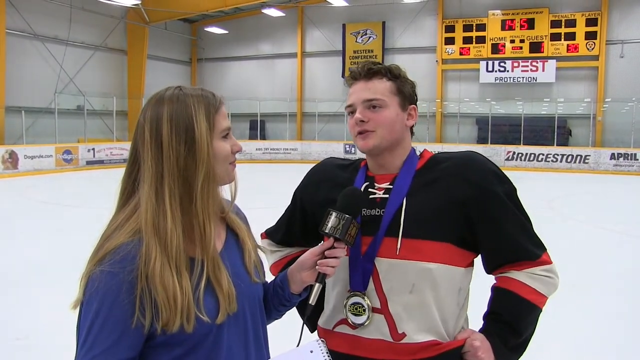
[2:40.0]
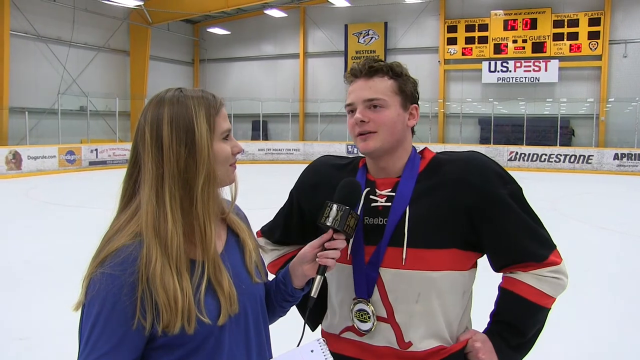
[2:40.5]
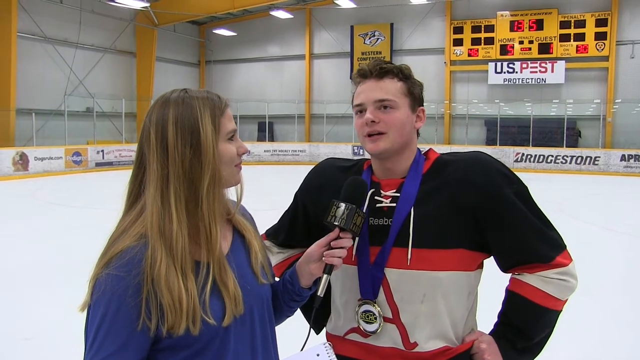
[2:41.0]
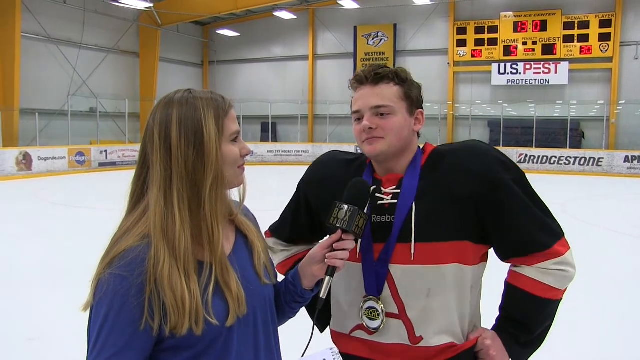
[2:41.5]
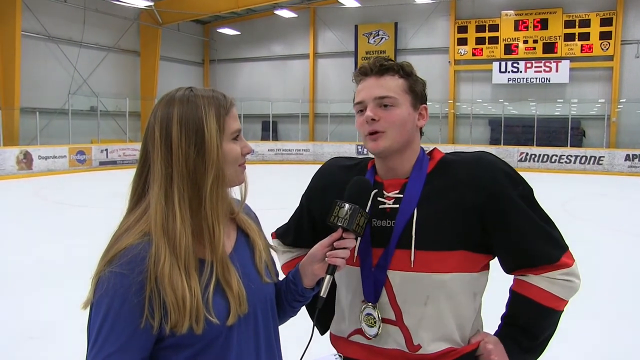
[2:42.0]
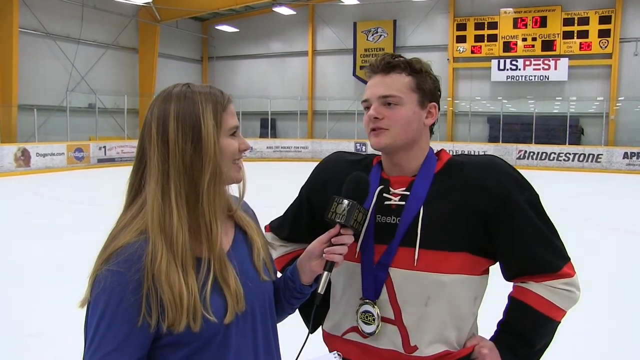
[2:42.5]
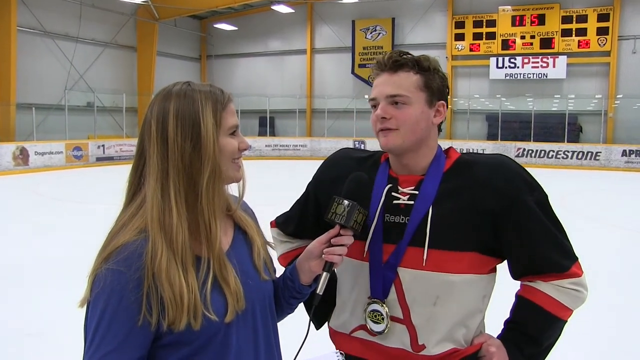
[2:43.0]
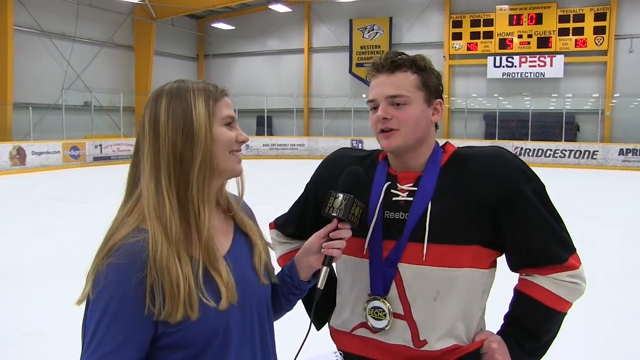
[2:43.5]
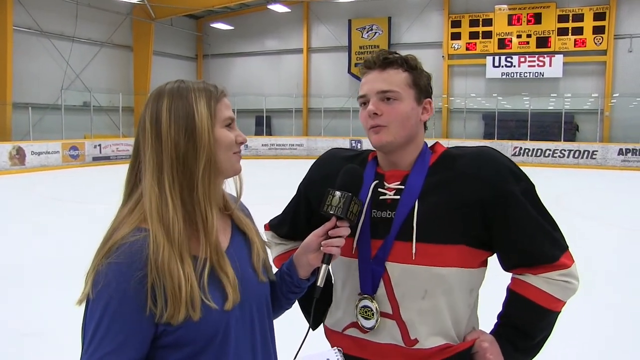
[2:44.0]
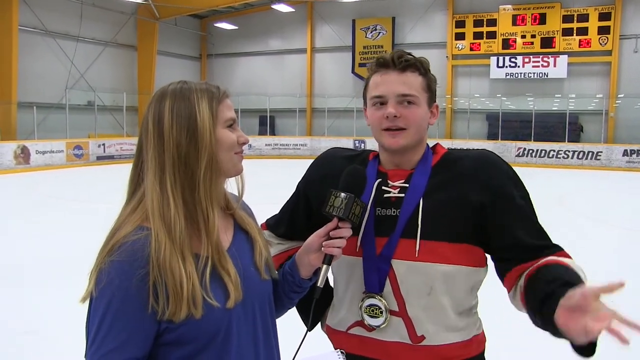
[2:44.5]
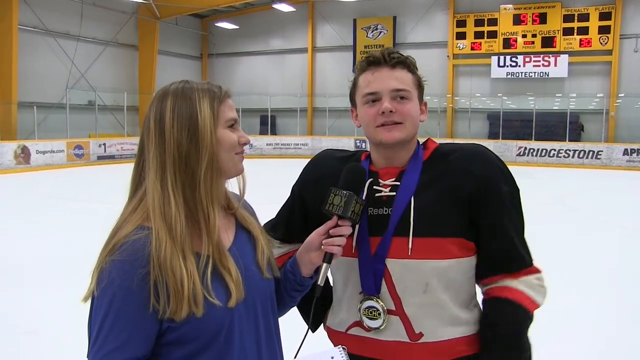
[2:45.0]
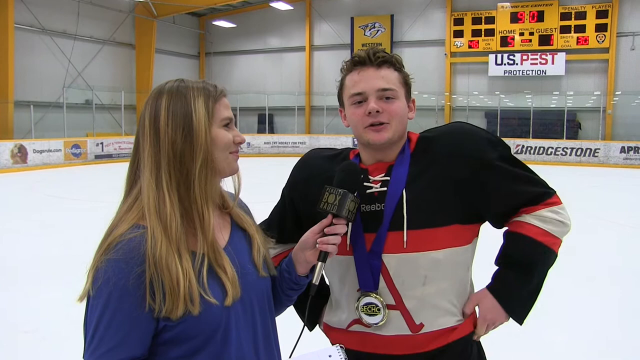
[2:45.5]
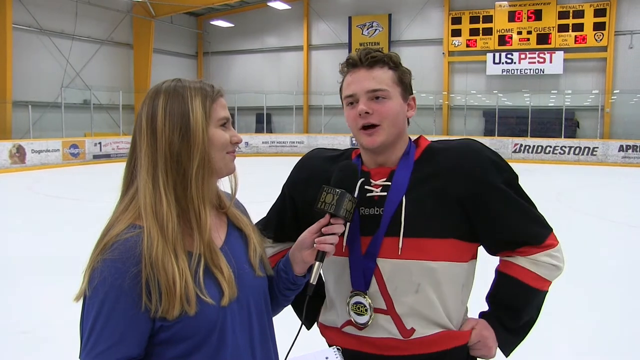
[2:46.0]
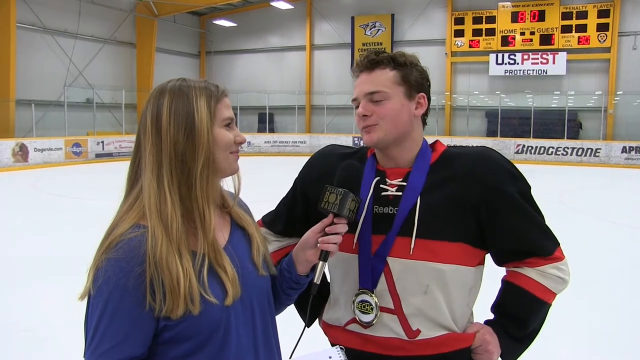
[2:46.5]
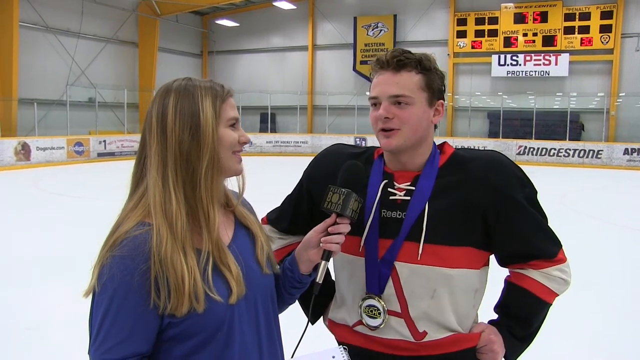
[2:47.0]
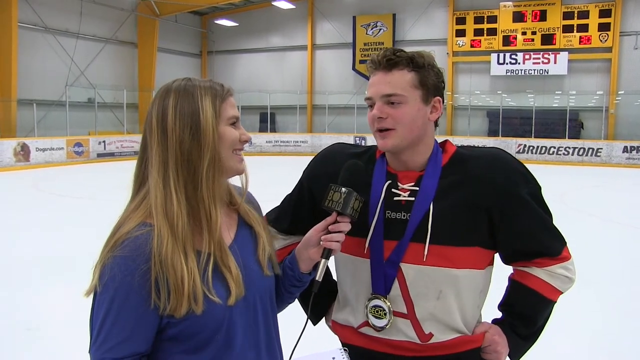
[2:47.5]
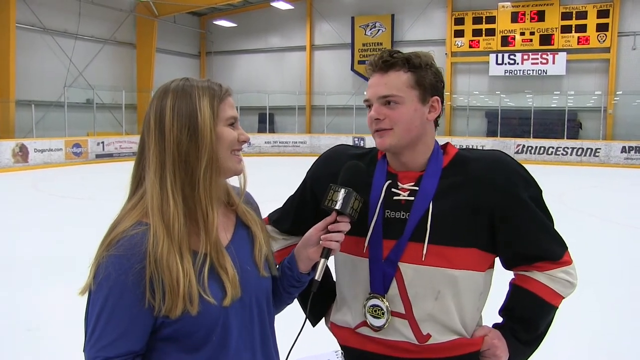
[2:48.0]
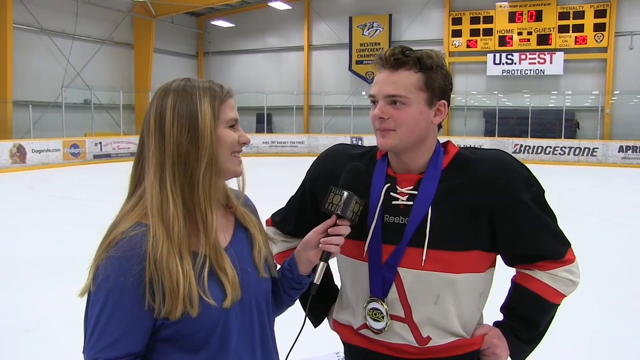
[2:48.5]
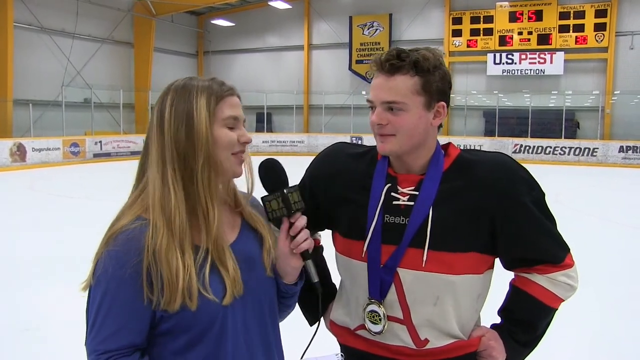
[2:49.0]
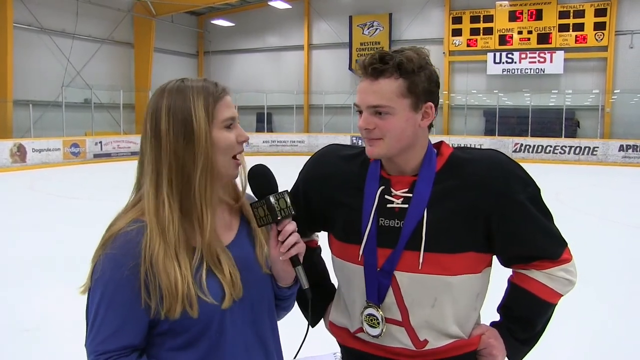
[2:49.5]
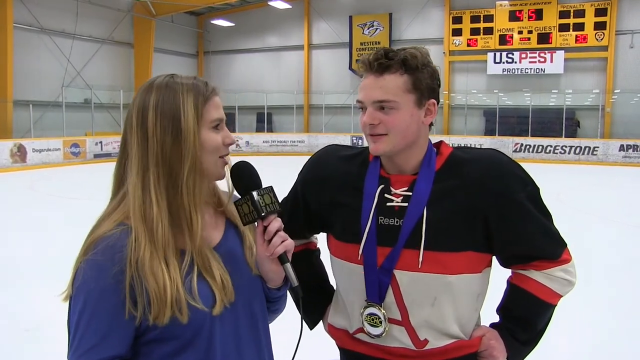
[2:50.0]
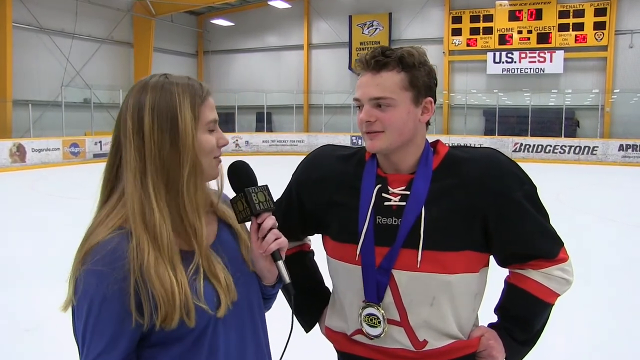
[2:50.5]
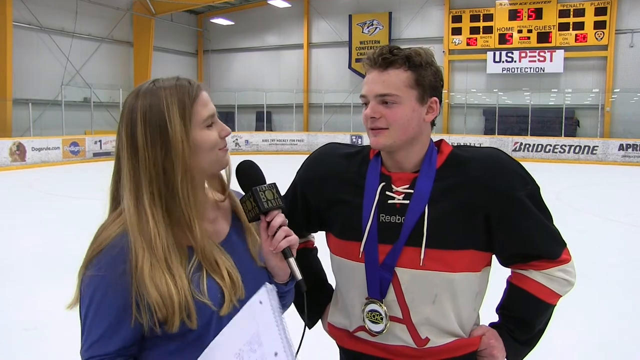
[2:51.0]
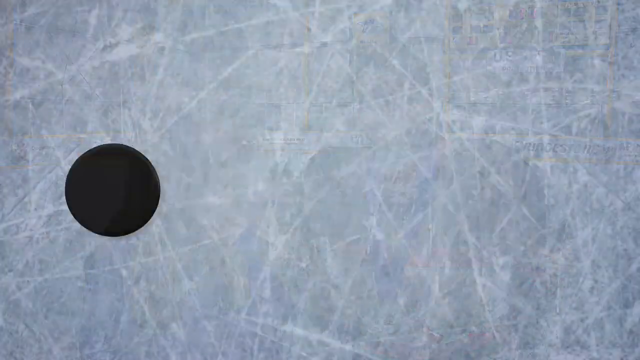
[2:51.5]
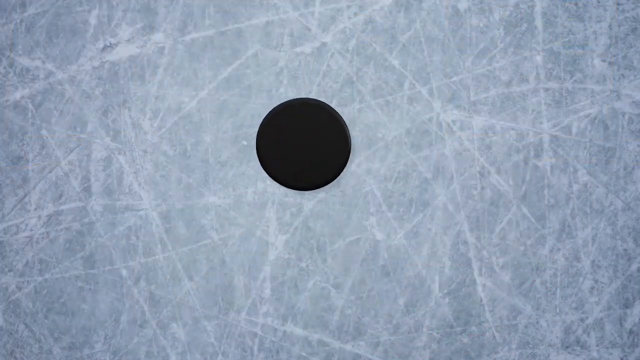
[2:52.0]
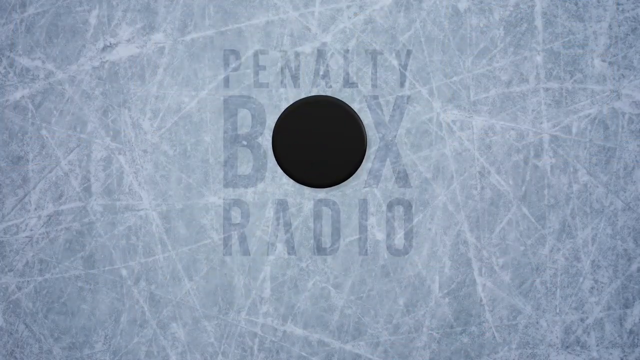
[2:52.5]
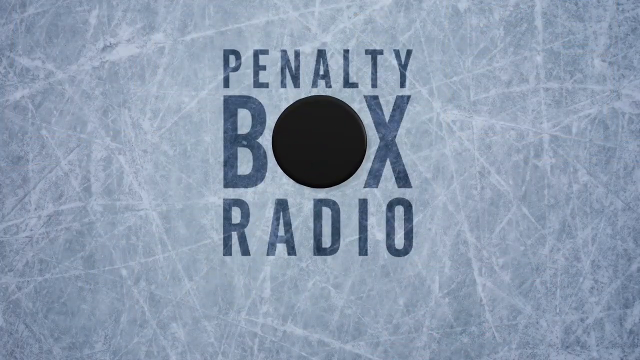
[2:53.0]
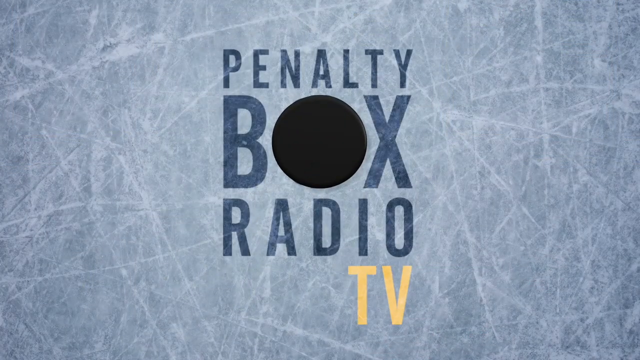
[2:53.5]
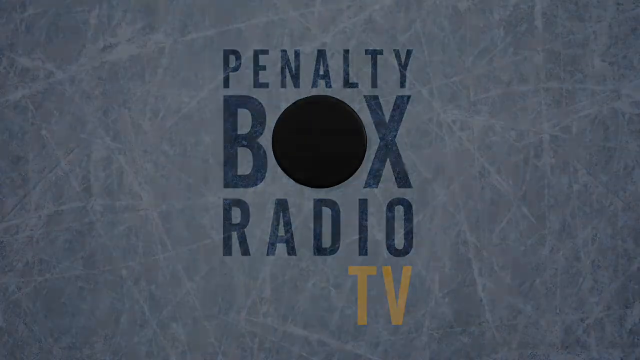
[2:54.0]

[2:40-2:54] Another hockey player is interviewed. He wears a black, red and yellow striped jersey with a red logo. Text in the background reads "Guess Best" and "Quality Box for your TV". The player is enthusiastic and talks directly into the microphone, which is held up by a woman with long blonde hair who is interviewing him.